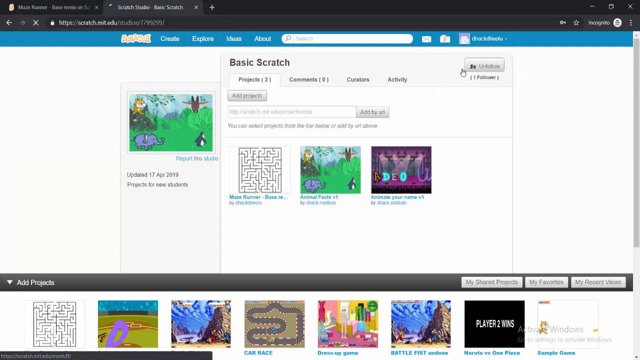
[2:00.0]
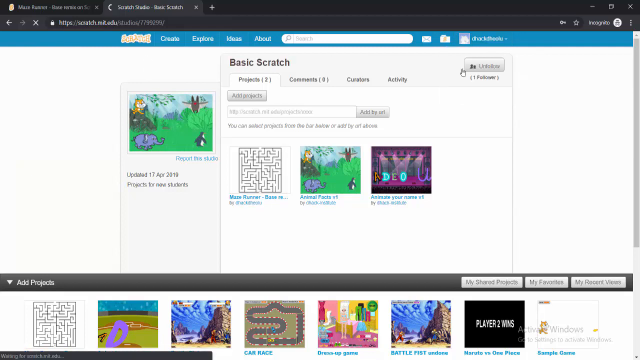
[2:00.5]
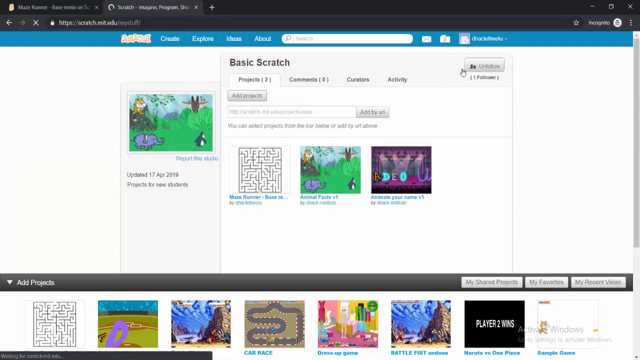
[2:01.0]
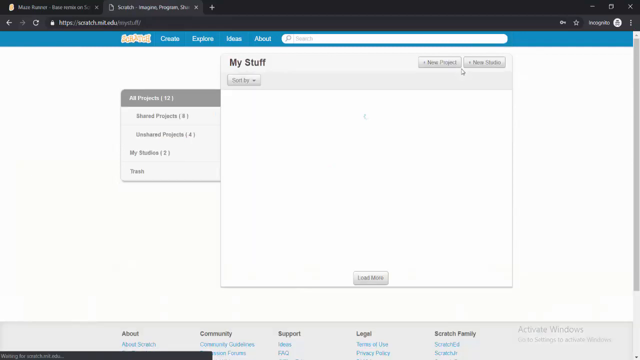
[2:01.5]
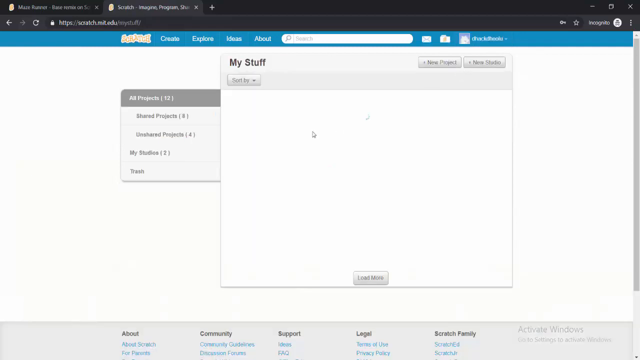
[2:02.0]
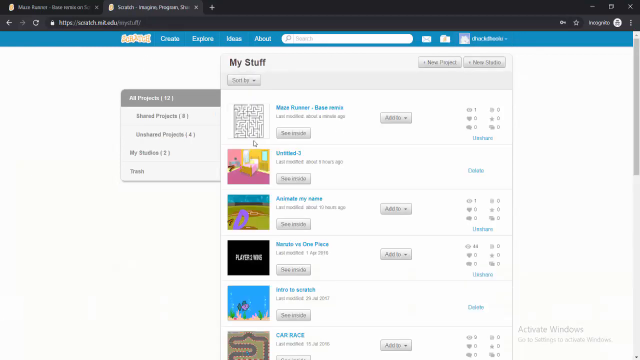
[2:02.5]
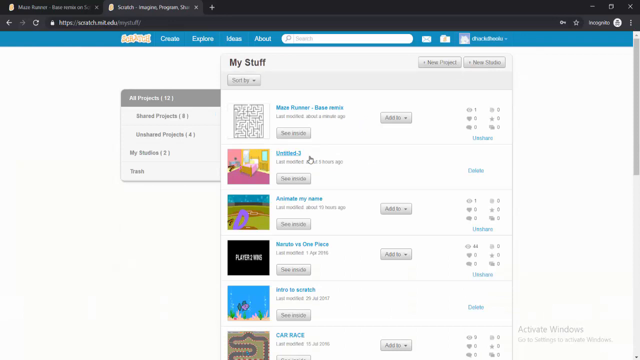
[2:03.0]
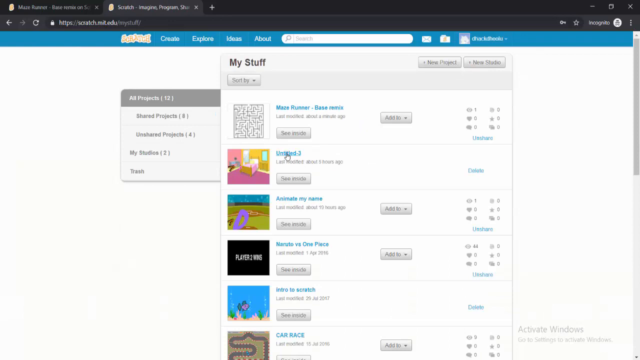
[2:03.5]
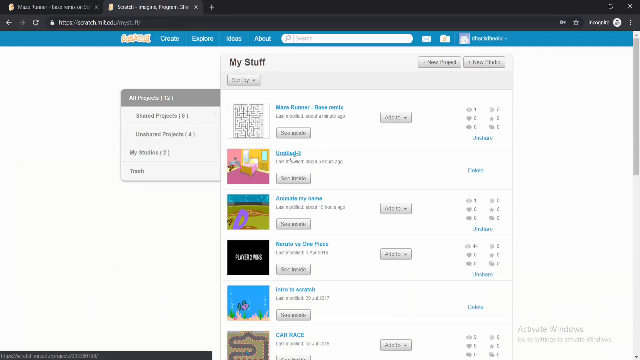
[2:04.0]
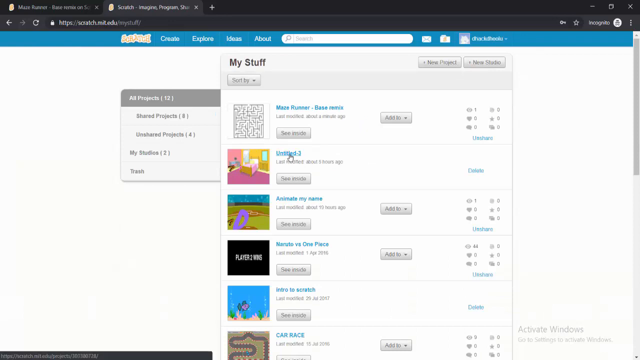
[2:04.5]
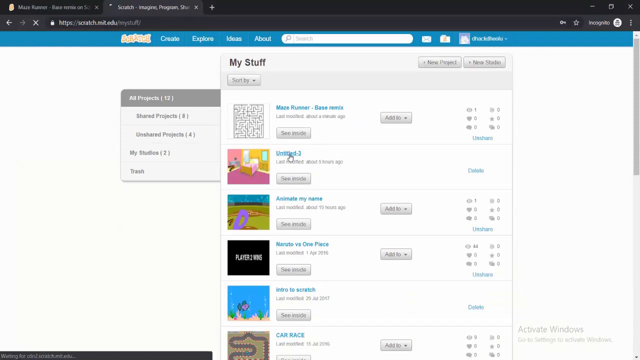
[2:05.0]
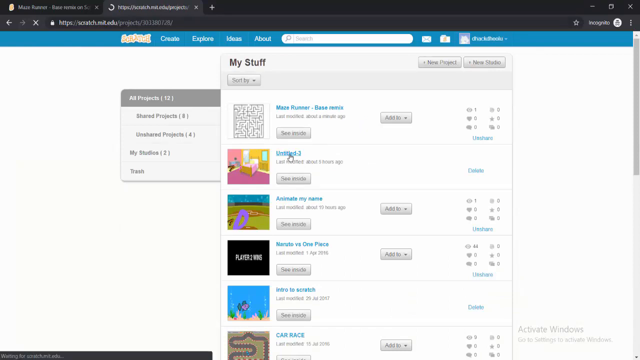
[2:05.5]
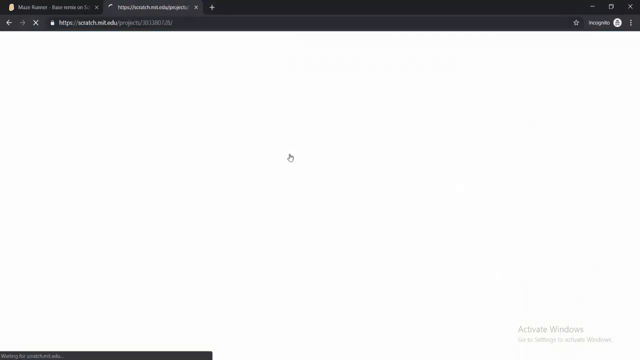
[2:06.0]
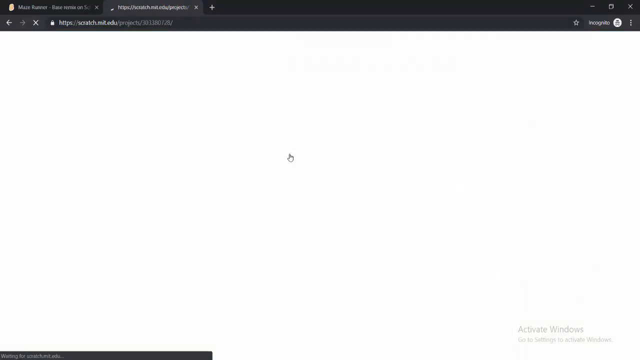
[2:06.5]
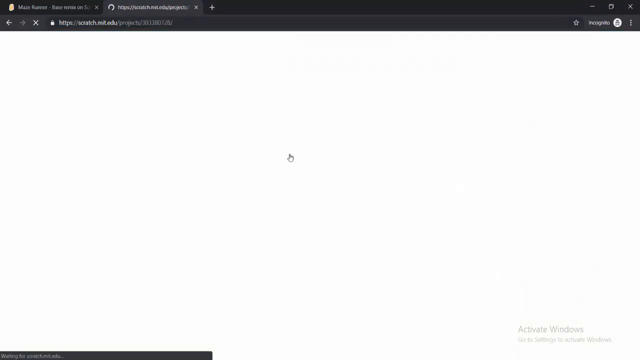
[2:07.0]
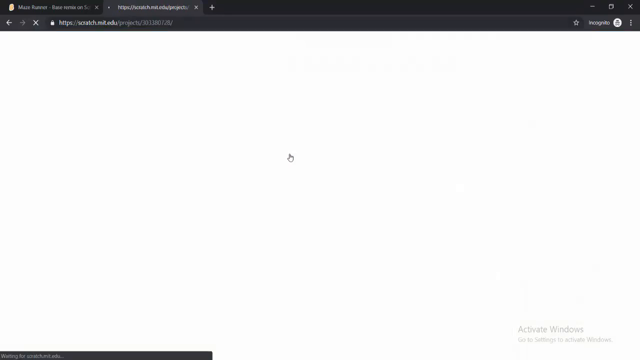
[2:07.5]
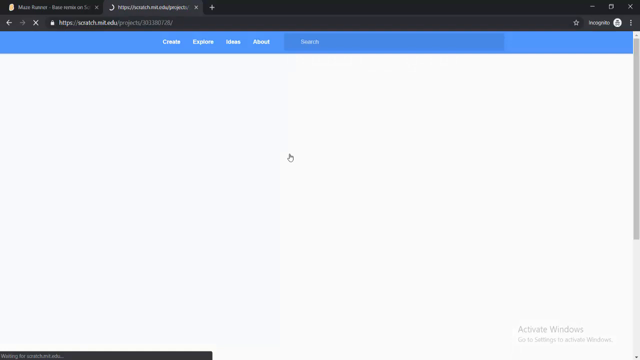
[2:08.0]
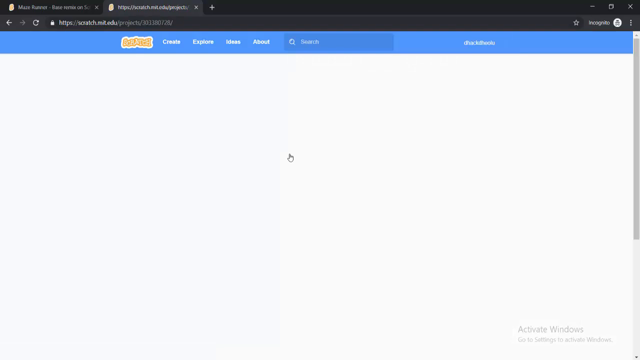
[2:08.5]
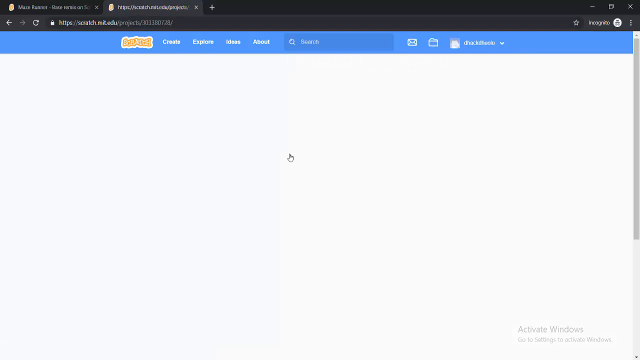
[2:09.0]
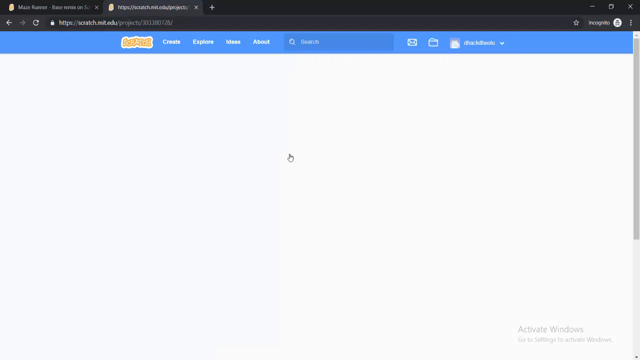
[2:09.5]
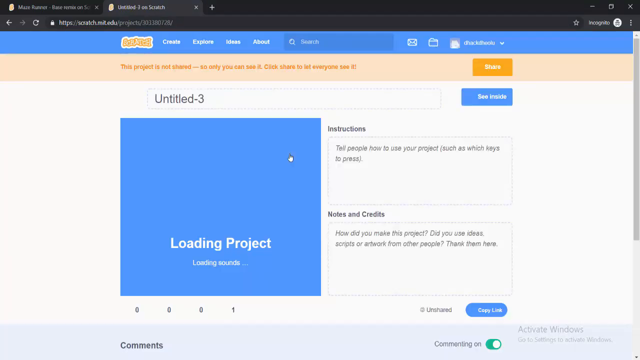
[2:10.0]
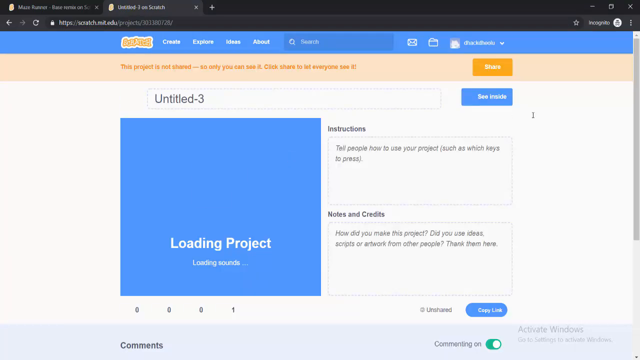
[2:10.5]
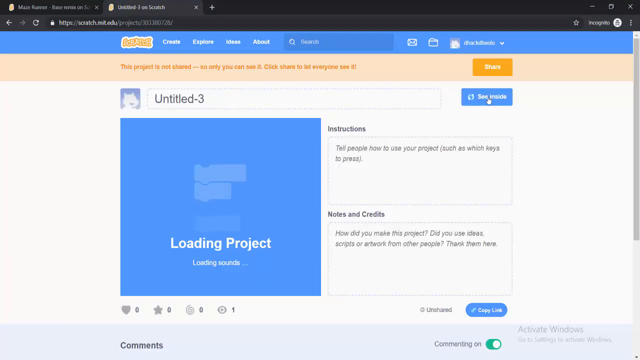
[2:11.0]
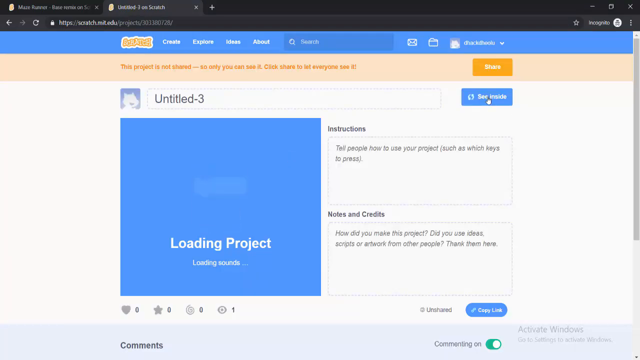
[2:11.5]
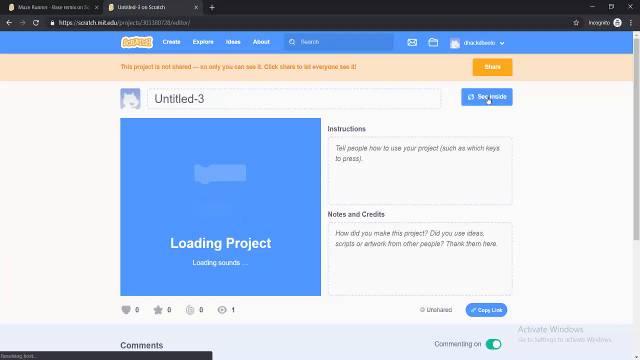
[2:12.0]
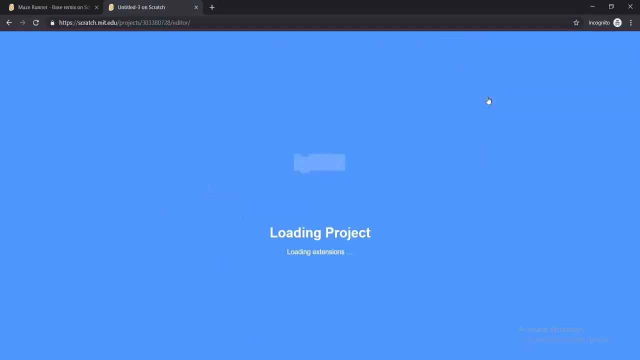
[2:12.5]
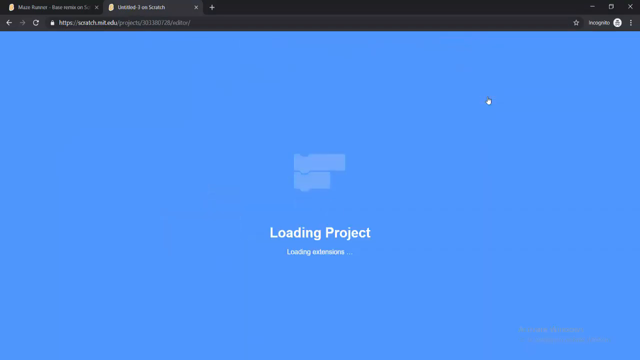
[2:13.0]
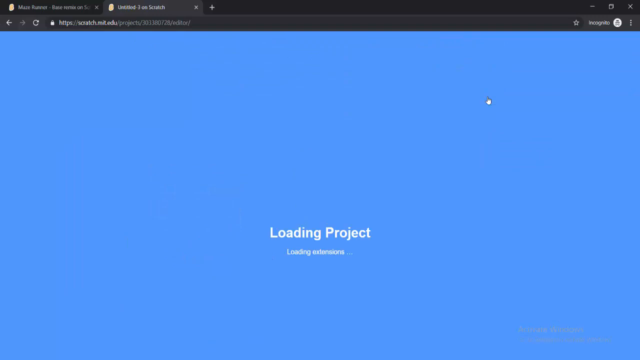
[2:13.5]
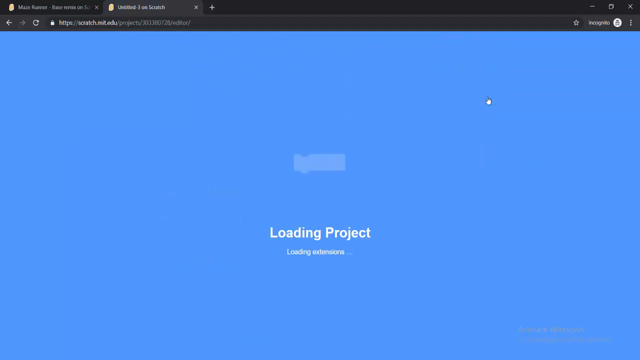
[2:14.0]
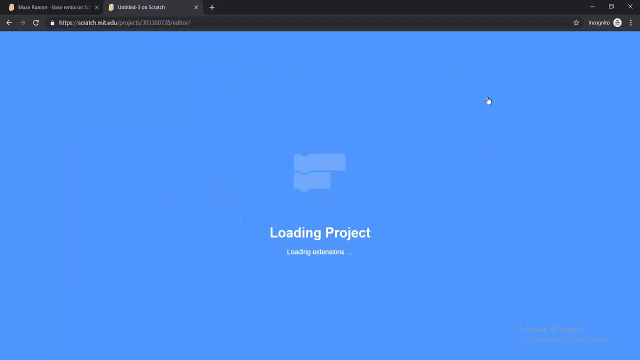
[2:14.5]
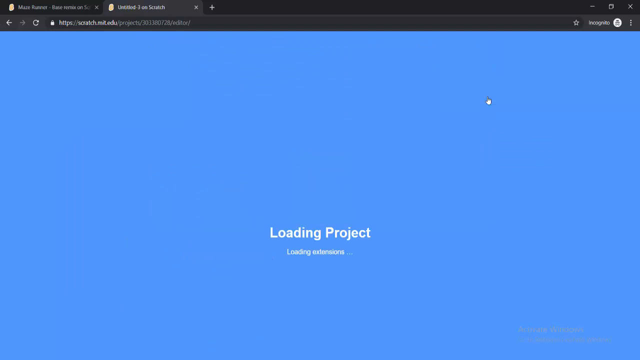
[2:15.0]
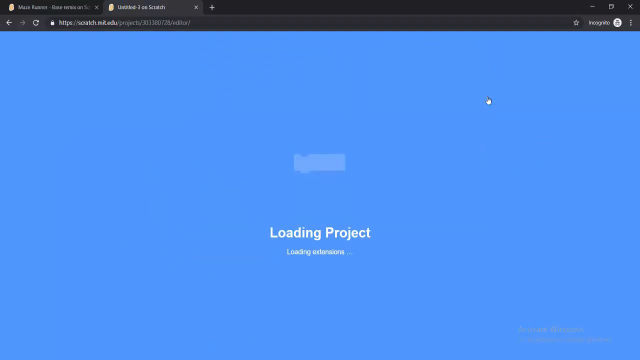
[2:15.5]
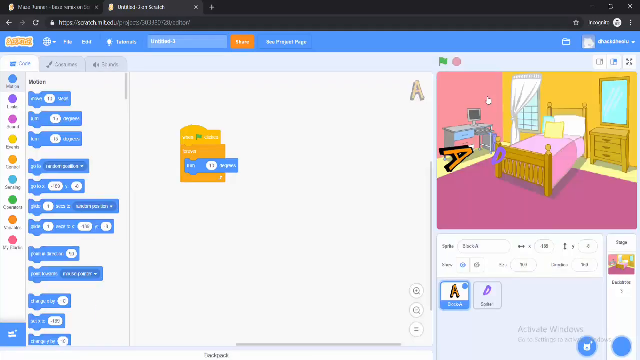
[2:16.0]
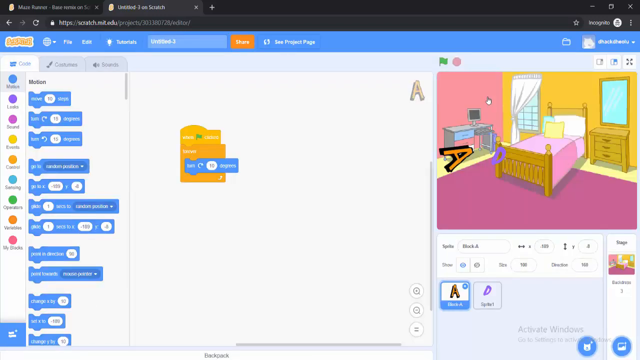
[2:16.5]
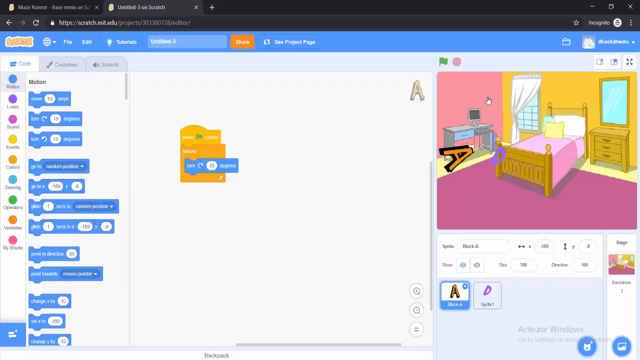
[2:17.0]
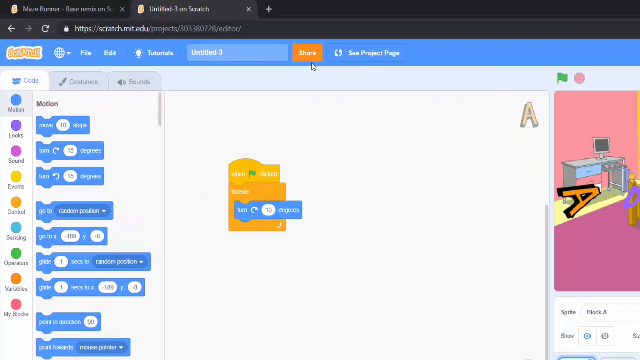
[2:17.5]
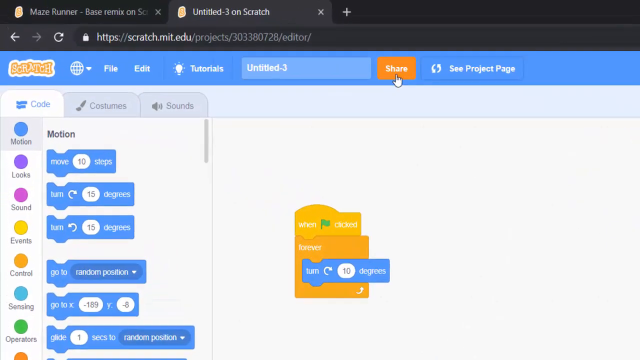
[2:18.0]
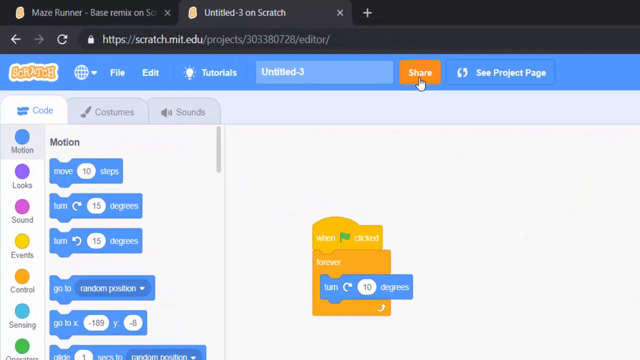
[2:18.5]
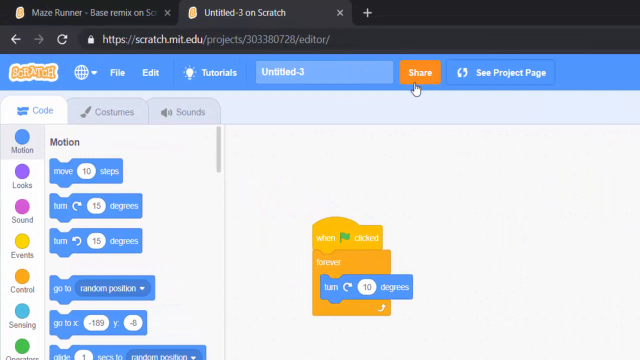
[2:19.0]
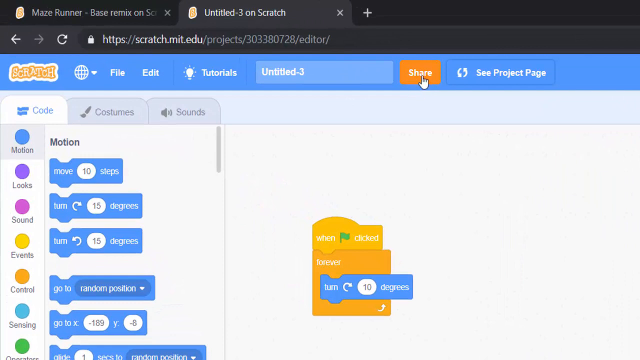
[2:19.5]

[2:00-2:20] The My Stuff page of the Scratch website loads, and several of the user's projects appear in rows. Each row has the project's image along with its name, a button to see inside it, a button to add to, and some statistics on the project's viewership. He clicks on the second of his projects, named Untitled-3, and it loads on its own page. He then clicks the button on the project page that says "see inside", and the website transitions to a loading screen with a blue background, loading the source code for the Untitled-3 project. The coding section of the Scratch website then appears, on a simple blank page that has the flag to start the code along with a simple loop event. The view zooms in to the top left of the page, and his mouse hovers over the share button in the top header.